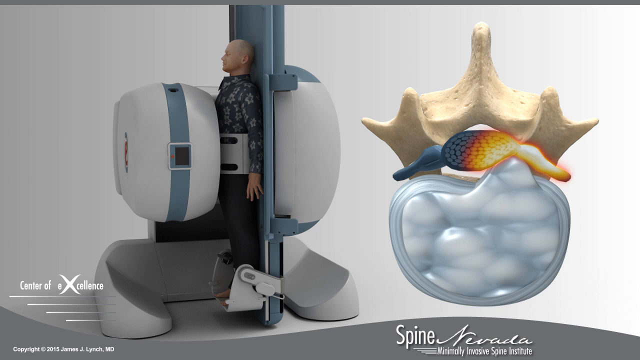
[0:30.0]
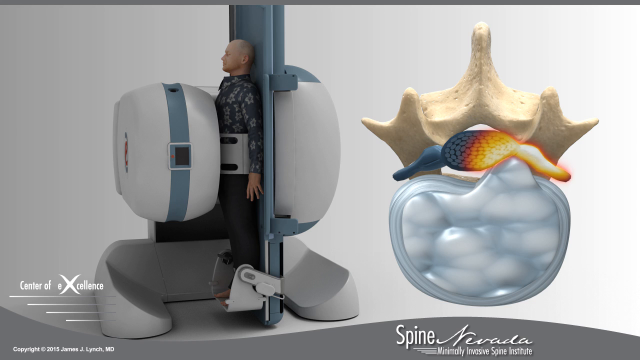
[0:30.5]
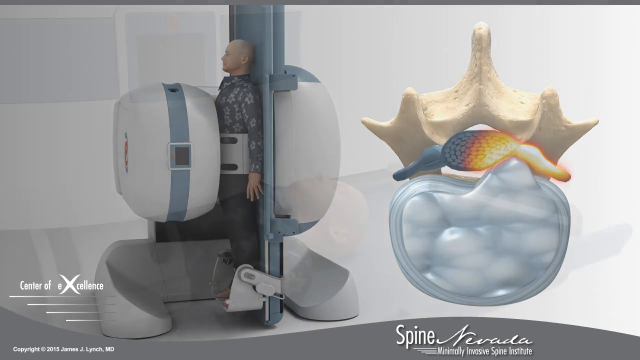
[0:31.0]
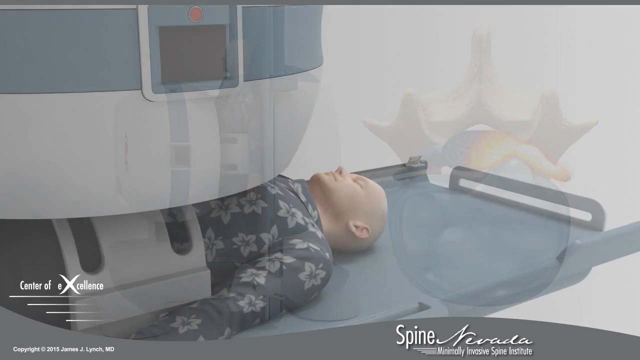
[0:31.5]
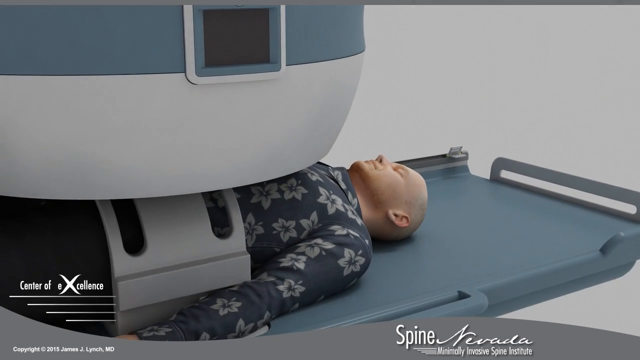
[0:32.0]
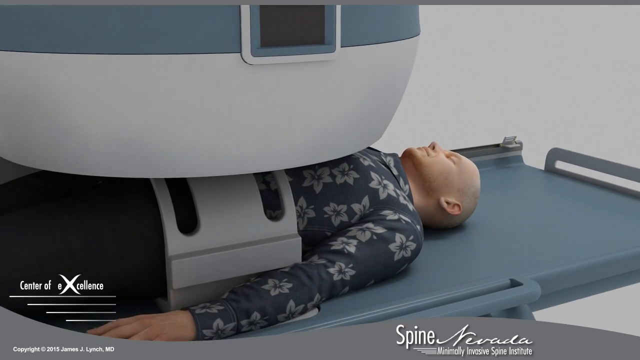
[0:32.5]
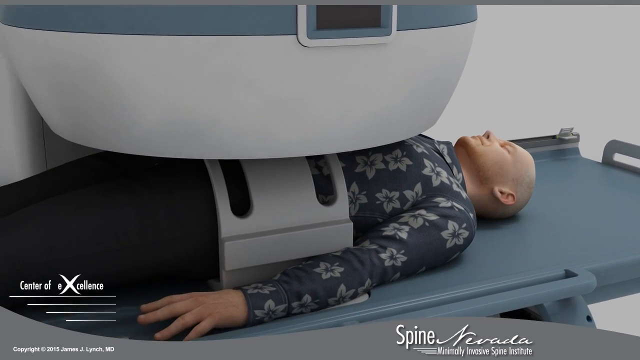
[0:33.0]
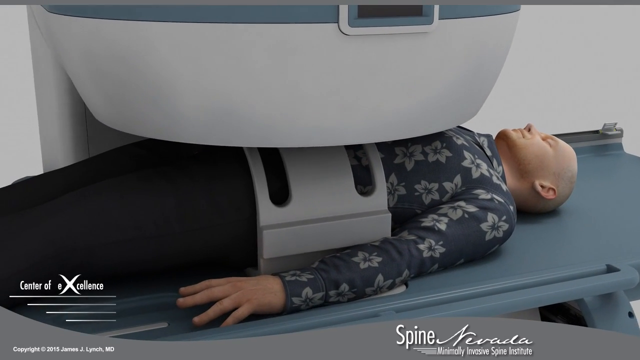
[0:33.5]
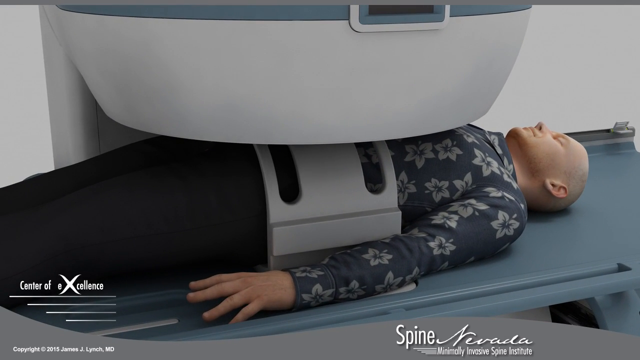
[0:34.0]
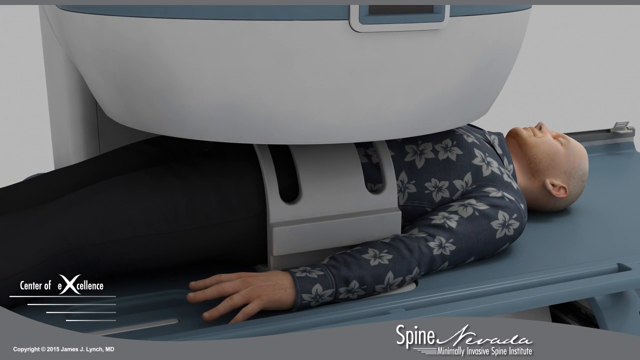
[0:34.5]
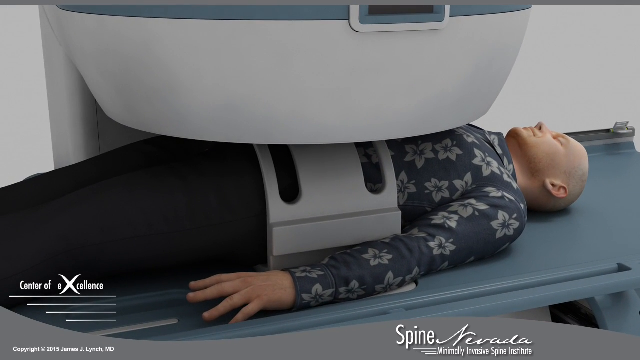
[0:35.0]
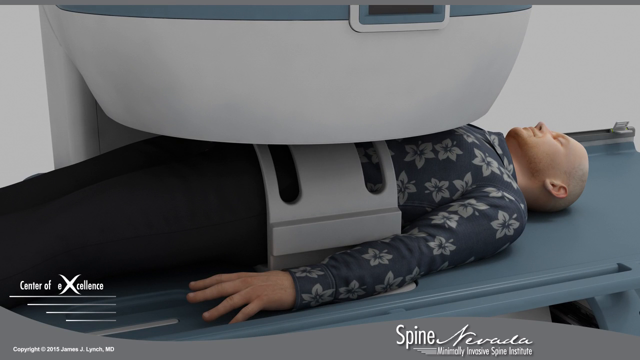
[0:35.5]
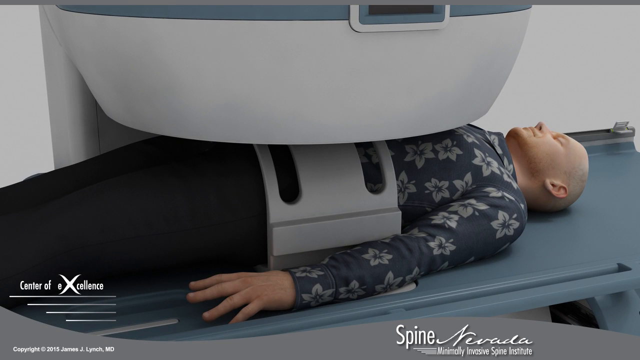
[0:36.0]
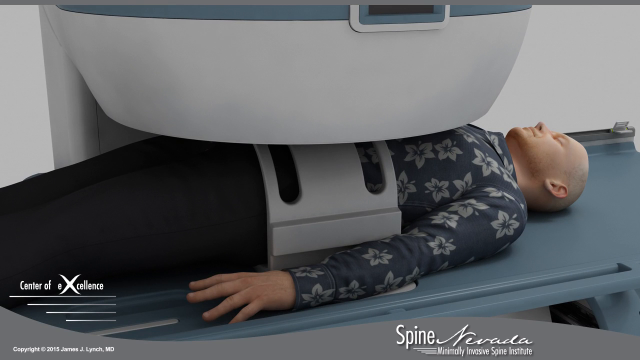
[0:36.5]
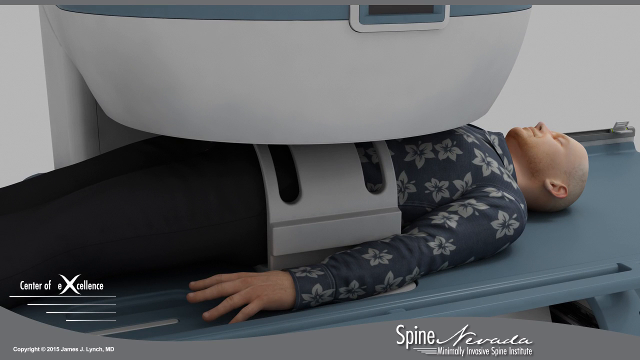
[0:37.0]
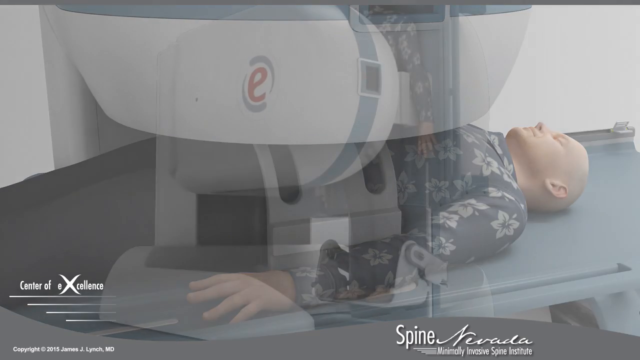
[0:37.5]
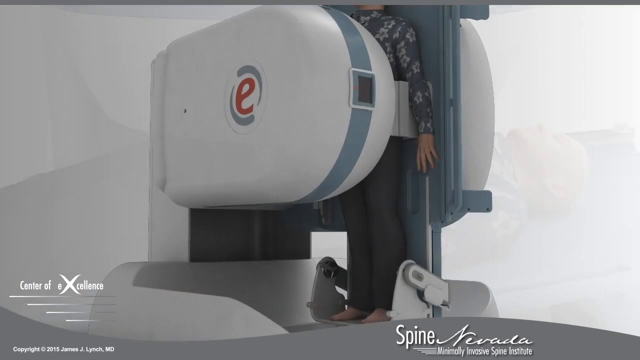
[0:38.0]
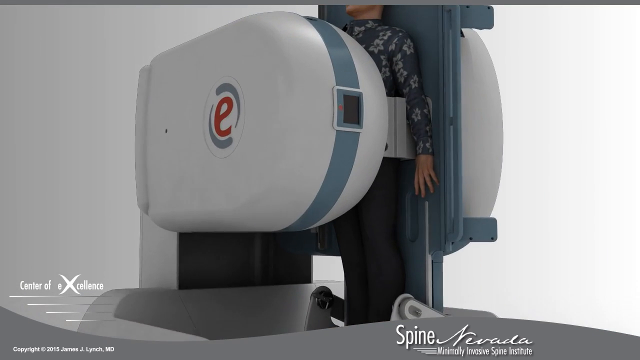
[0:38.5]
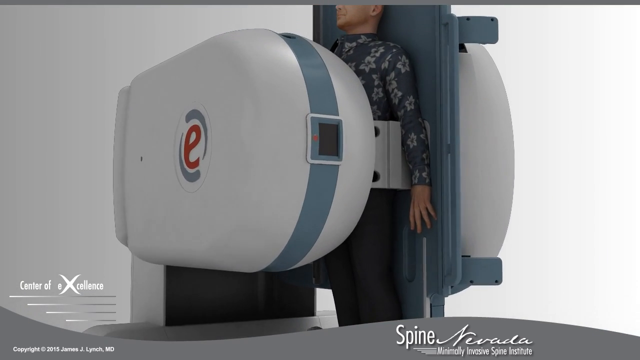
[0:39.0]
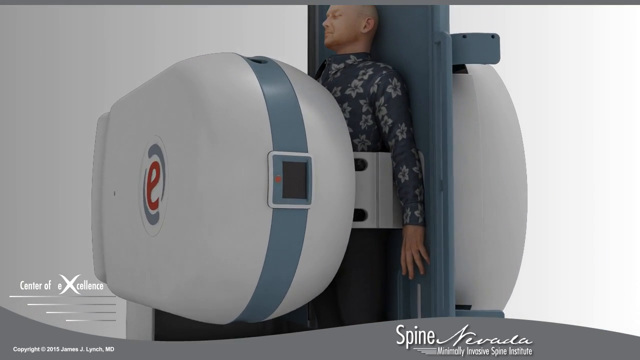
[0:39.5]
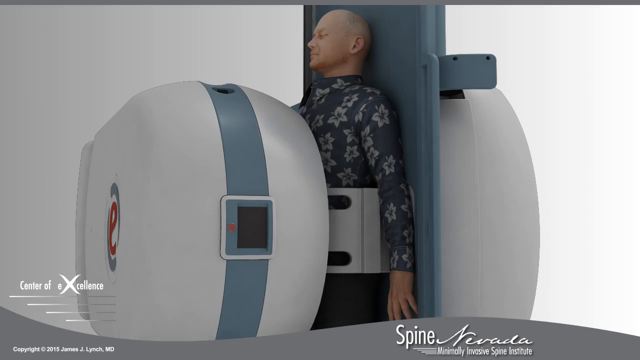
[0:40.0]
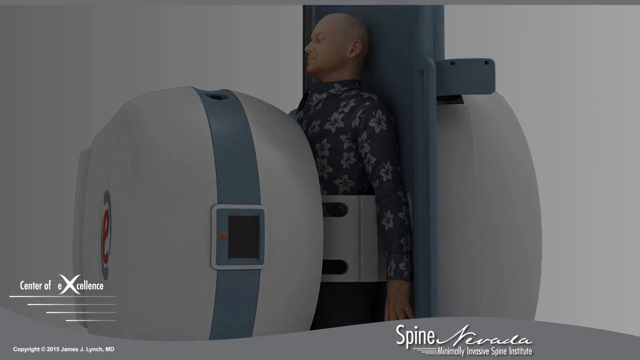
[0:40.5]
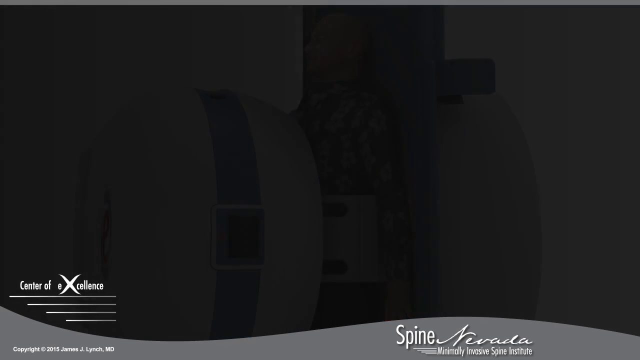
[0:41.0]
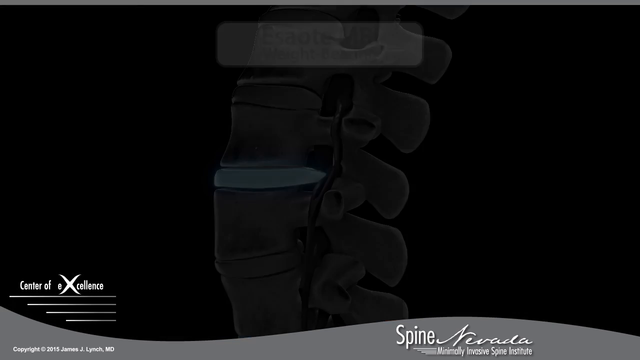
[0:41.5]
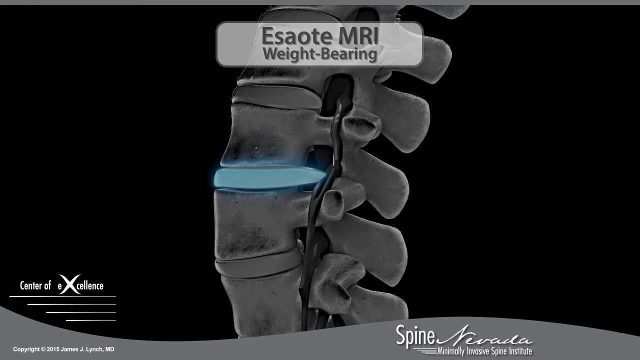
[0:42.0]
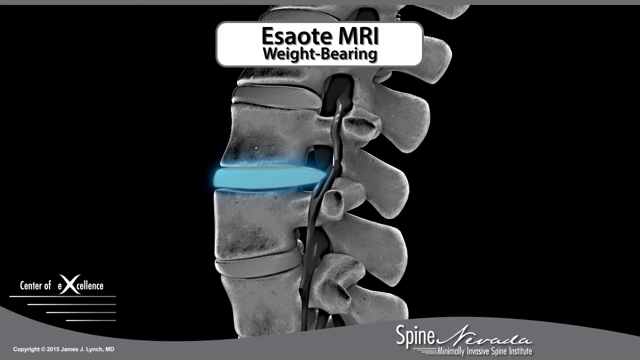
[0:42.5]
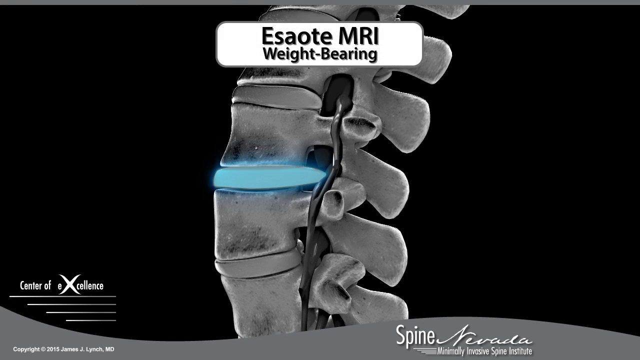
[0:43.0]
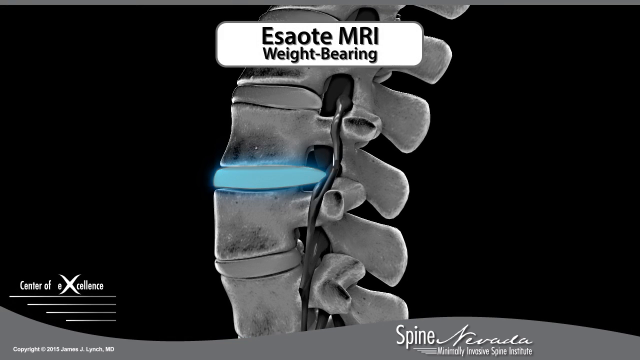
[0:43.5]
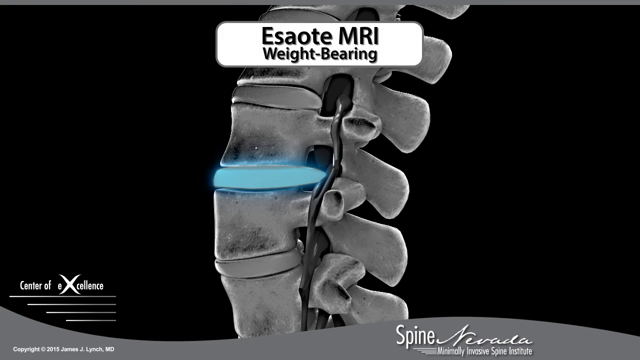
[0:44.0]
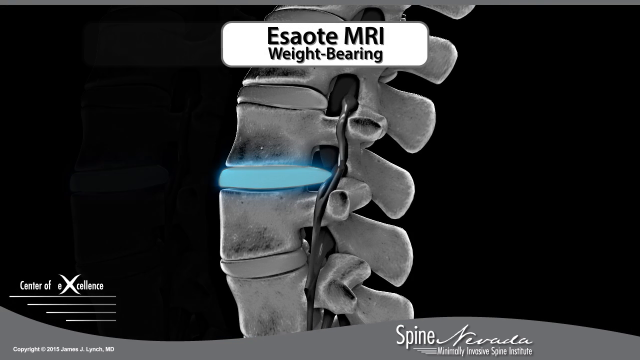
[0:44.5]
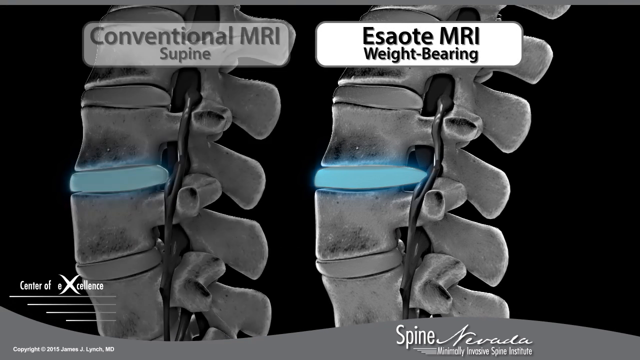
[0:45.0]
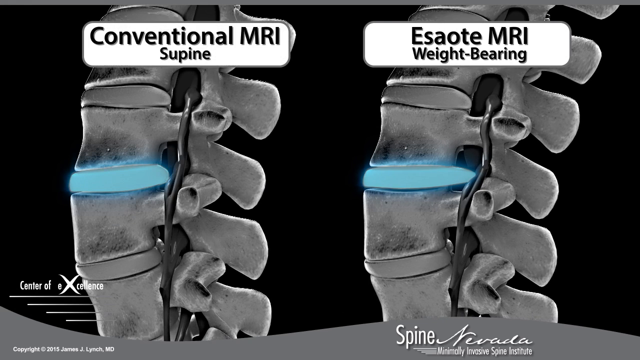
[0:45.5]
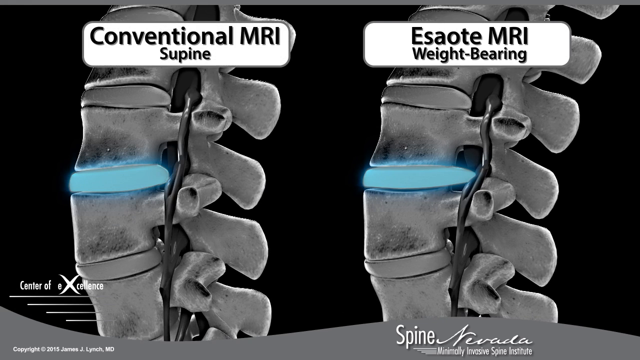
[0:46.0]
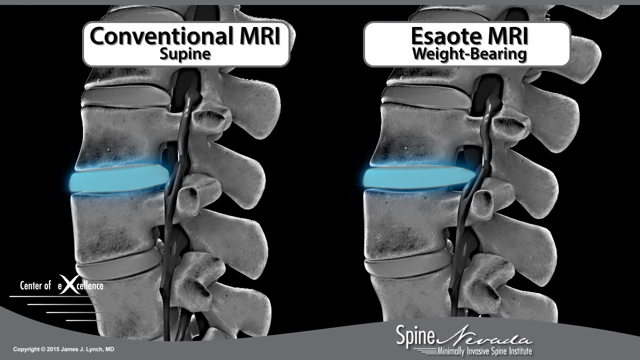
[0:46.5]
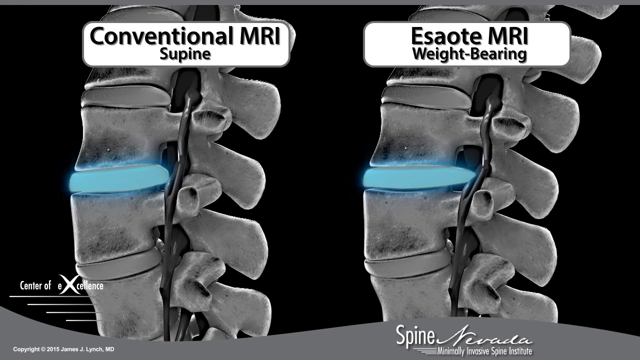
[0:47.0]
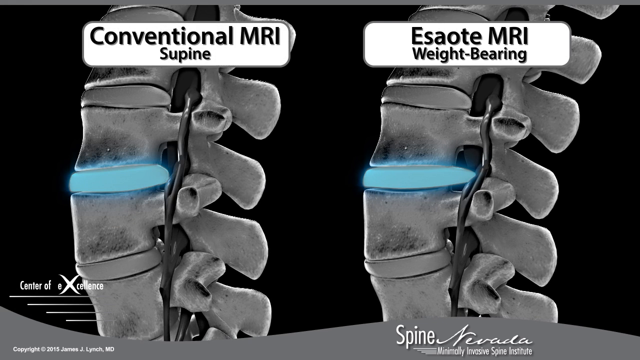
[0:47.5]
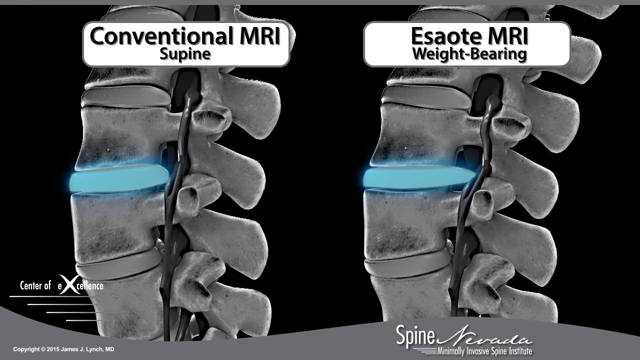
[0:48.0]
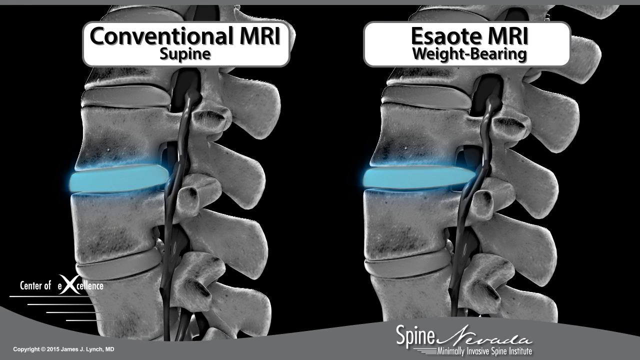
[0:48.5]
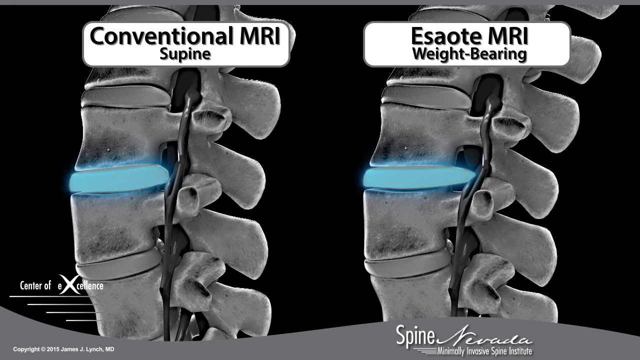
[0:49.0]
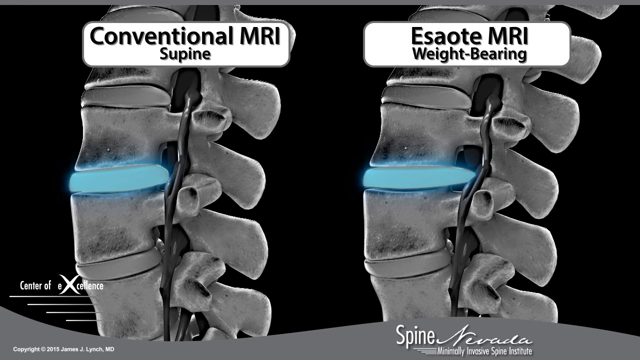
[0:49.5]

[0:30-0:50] The scene fades into another view where the person is horizontal, strapped into the machine; it is a man wearing dark pants and a floral shirt. It then fades into a different view where he is vertical in the machine. Next comes a black background with a picture of a spine in the middle of the screen and text reading "SAOTEMRA weight bearing". Part of the spine, like a disc, is highlighted in blue. That image moves to the right and the same image appears on the left side with text reading "conventional MRI supine"; both images have the blue highlighted portion. In the bottom left corner is a logo reading "Center of Excellence" with a large X, and on the right side of the screen text reads "Spine Nevada".